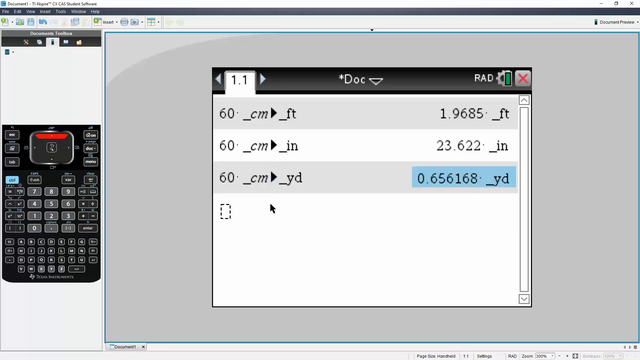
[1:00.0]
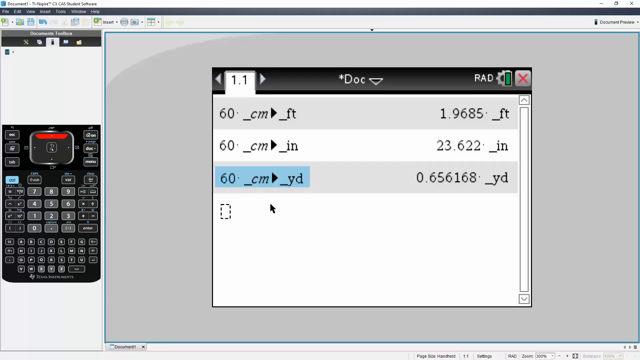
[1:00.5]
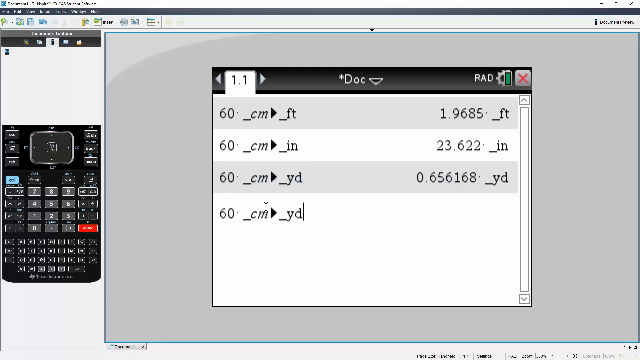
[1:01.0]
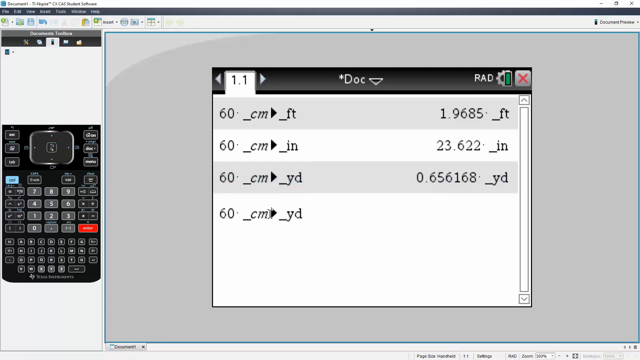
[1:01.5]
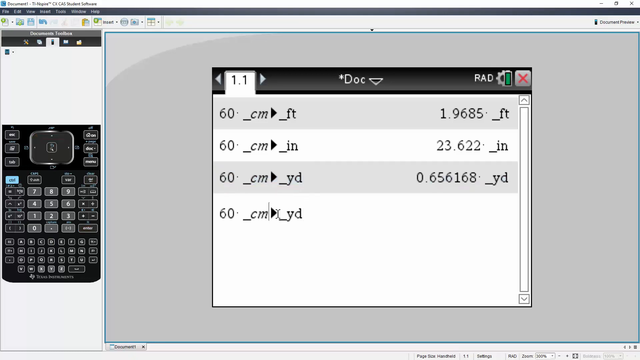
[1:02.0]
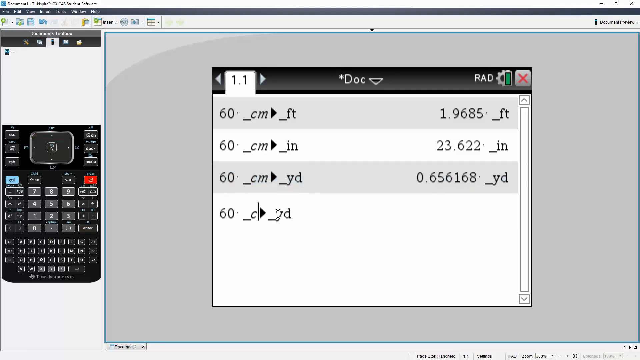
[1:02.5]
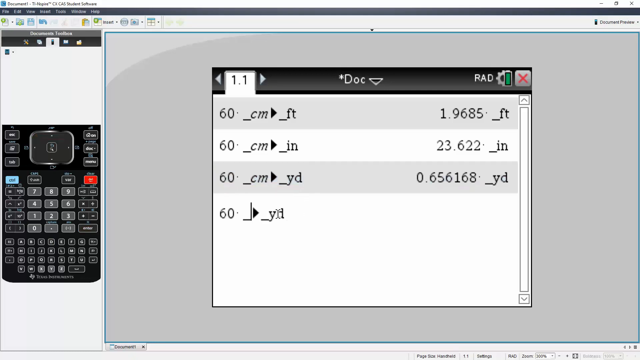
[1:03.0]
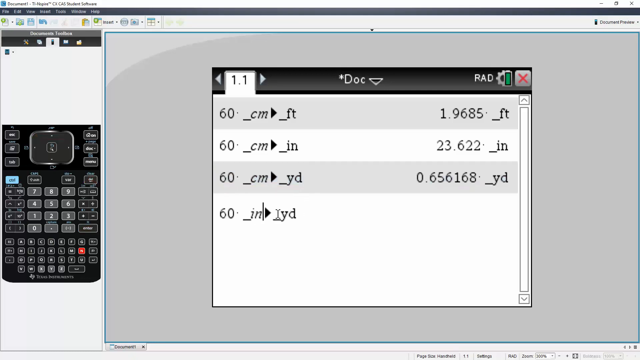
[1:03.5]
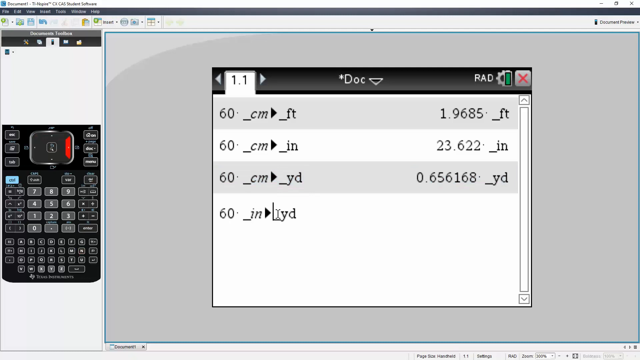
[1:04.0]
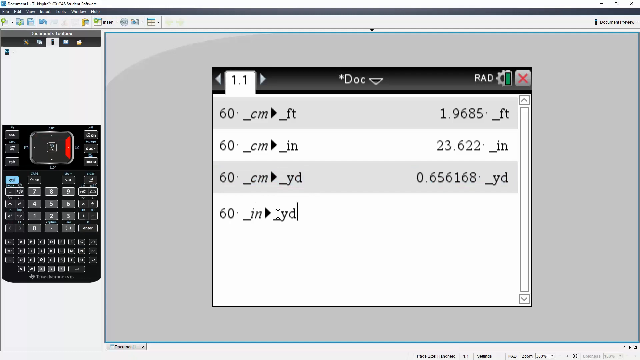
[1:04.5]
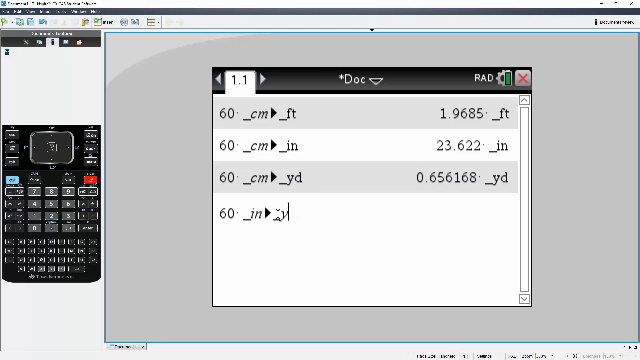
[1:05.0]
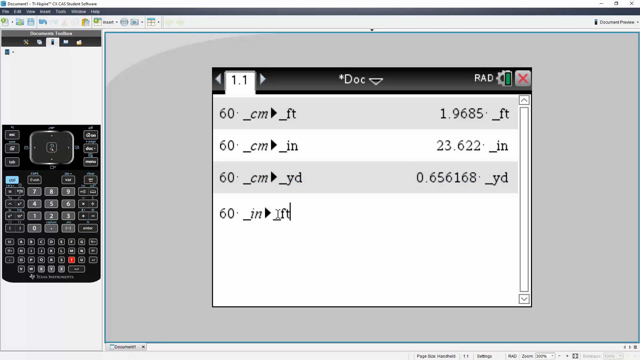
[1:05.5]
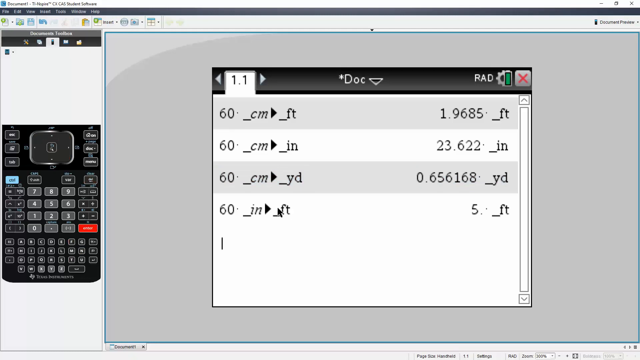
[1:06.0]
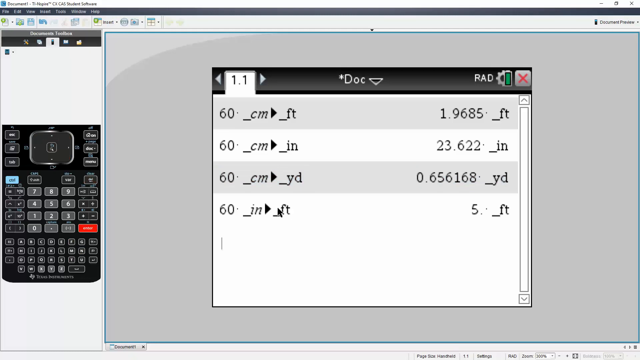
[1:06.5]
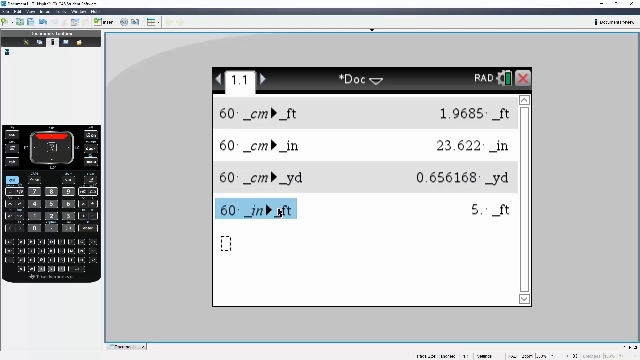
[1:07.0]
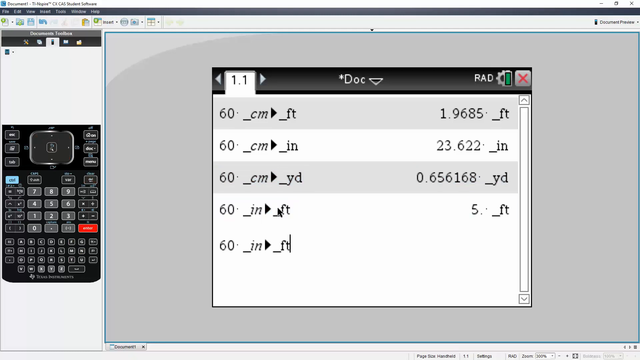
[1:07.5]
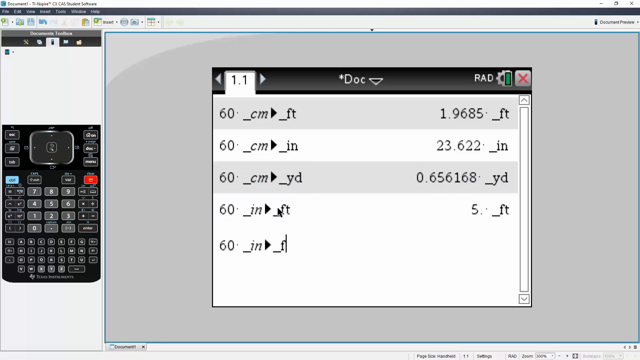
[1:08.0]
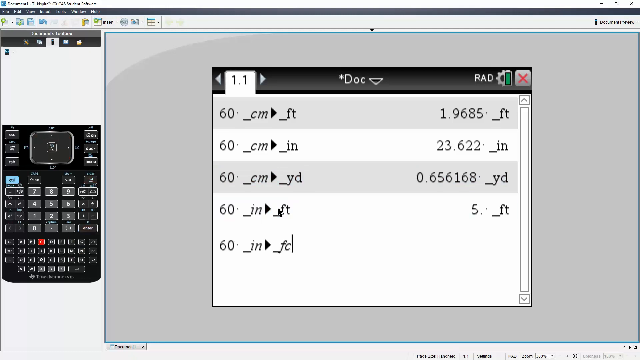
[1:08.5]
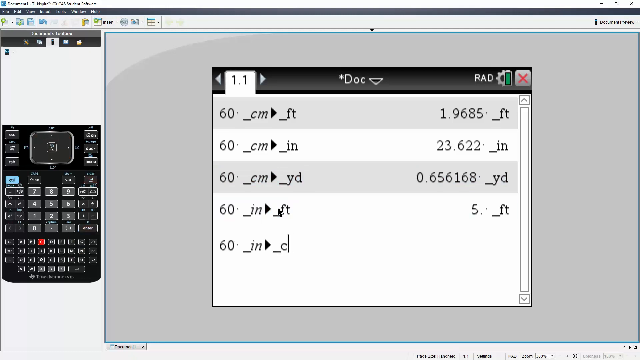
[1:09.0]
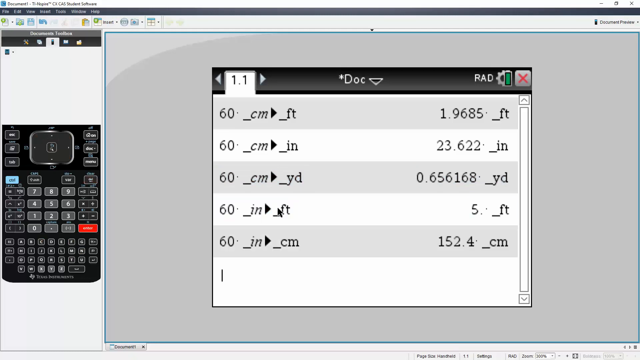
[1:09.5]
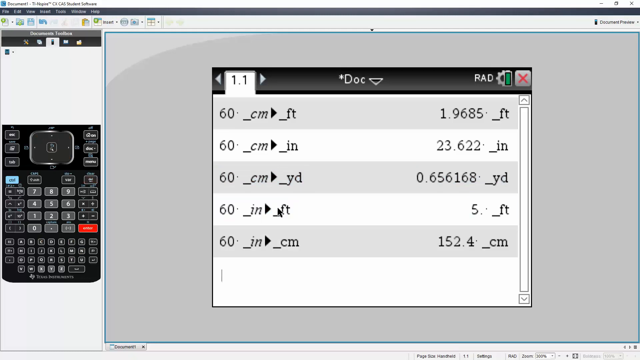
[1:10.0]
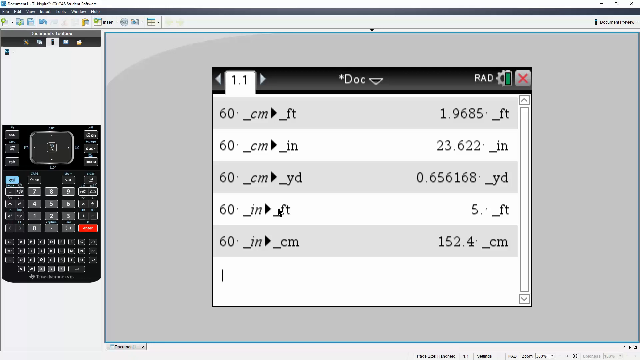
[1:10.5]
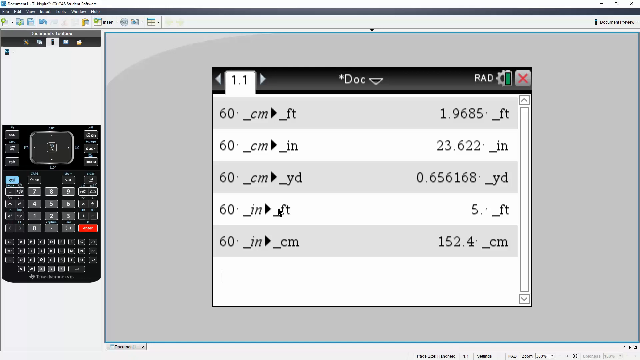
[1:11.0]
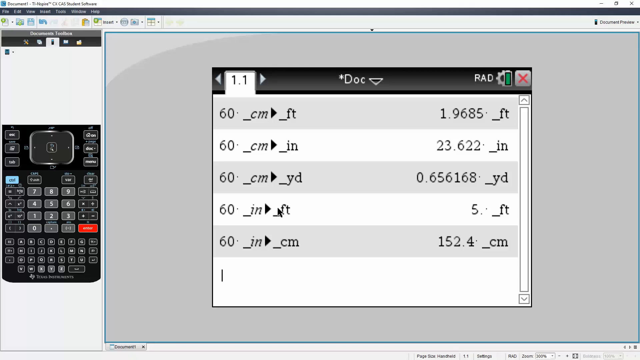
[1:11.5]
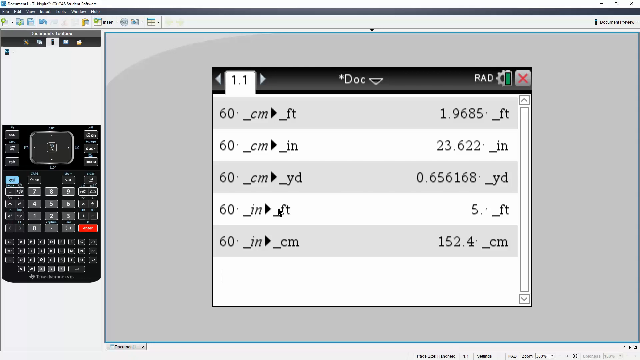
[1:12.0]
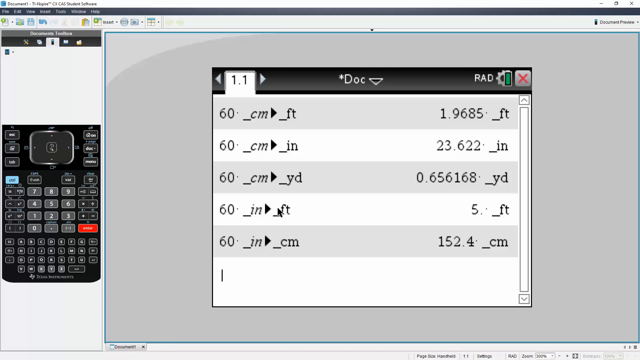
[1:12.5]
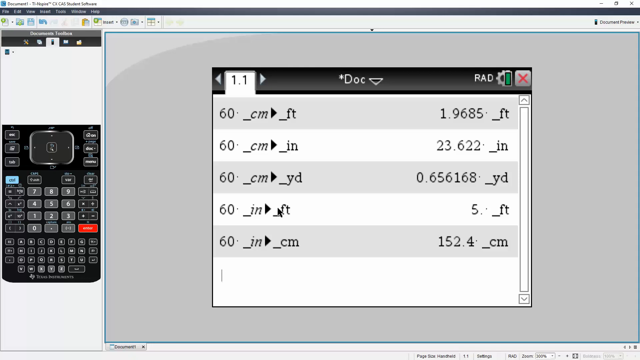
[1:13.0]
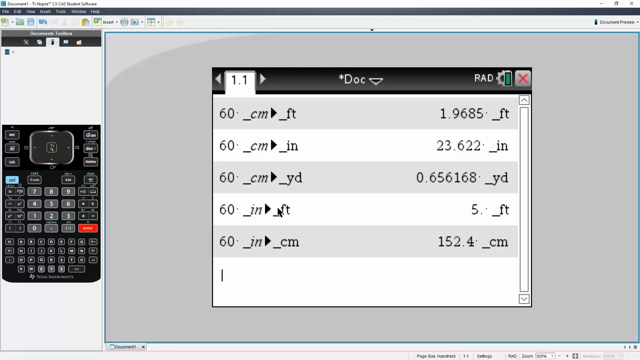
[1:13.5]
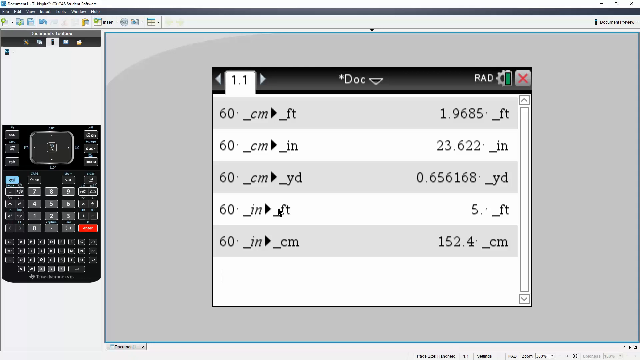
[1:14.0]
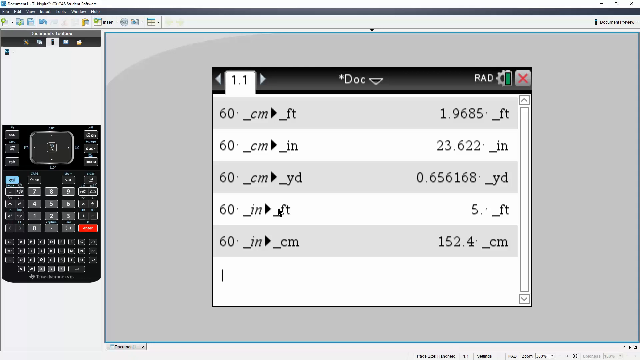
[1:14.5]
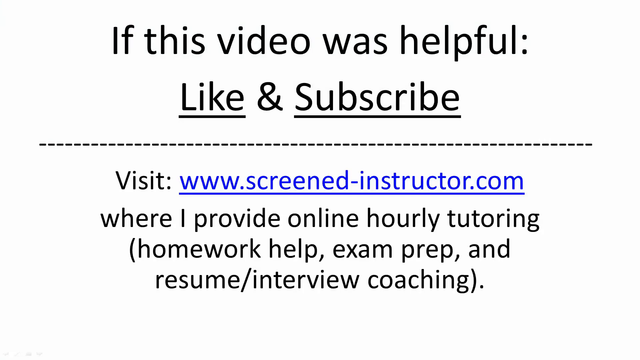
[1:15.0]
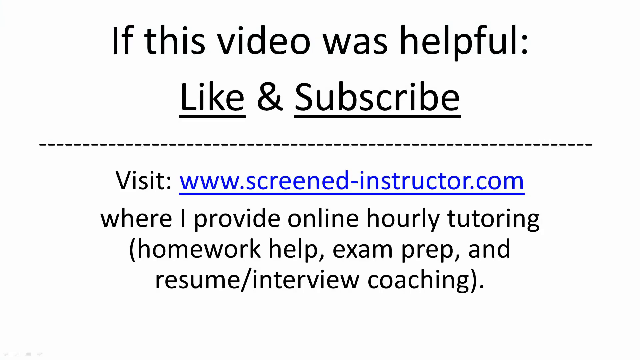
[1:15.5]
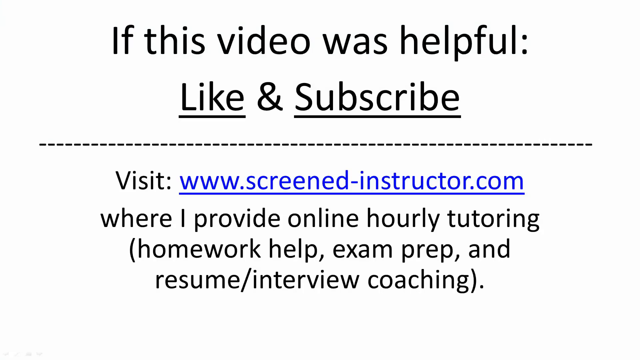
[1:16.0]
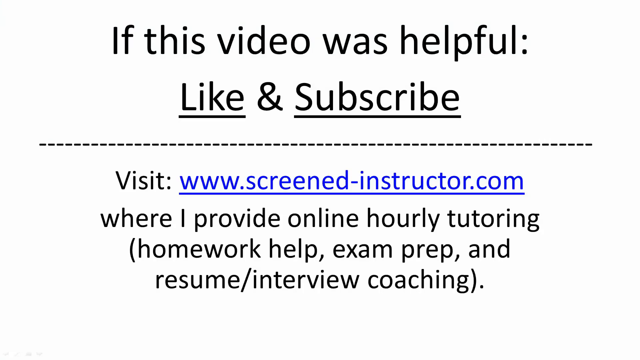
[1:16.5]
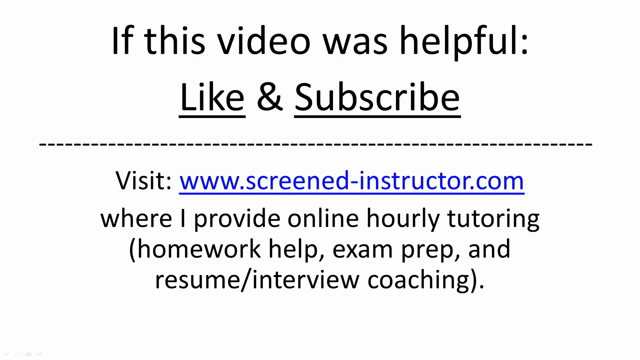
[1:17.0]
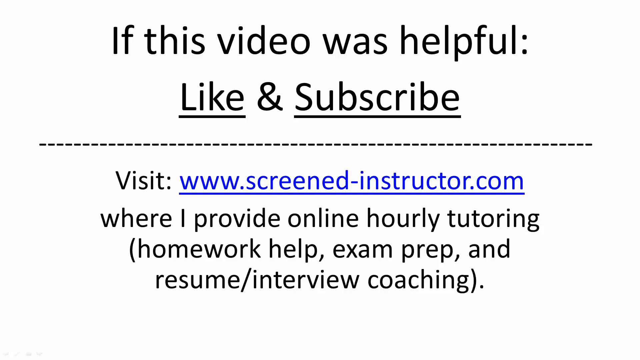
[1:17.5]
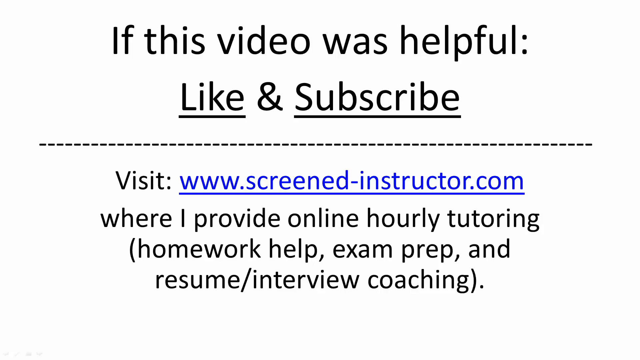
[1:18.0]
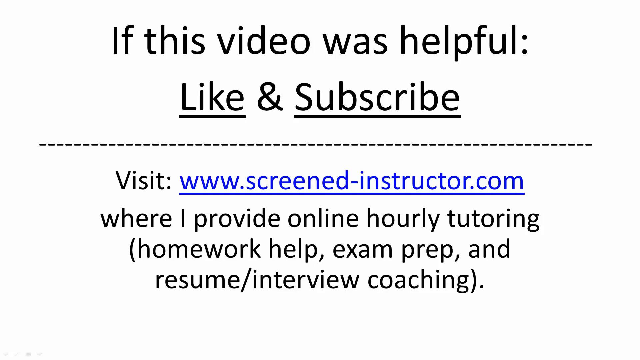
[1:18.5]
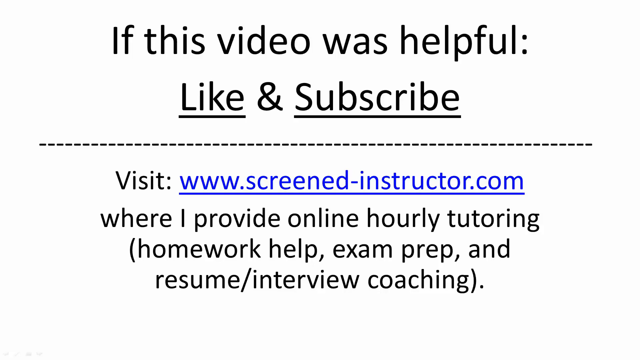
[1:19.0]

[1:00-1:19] The 60 centimeters to yards line is copied and pasted below it. This time the CM is erased and changed to inches, and yard is changed to feet. On the right side the answer is five feet. Each time this is done, a red button lights up on the calculator, but it is very small and hard to make out exactly. The line is copied and pasted again, and feet is changed to centimeters. To the right of it, the answer for 60 inches in centimeters reads "152.4 centimeters". The video then goes to an all-white background with big black lettering at the top: "If this video was helpful, like and subscribe", with "like" and "subscribe" both underlined. Little black dots run across the screen. Below, it says "visit", with their web page highlighted in blue, and in black "where I provide our online hourly tutoring, homework help, exam prep, and resume interview coaching".